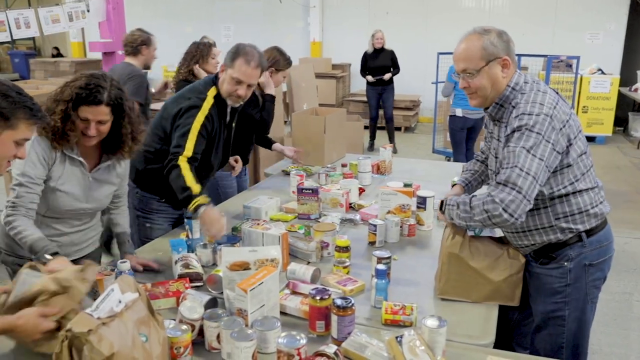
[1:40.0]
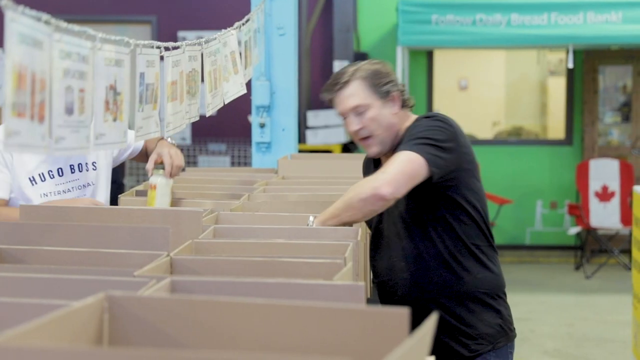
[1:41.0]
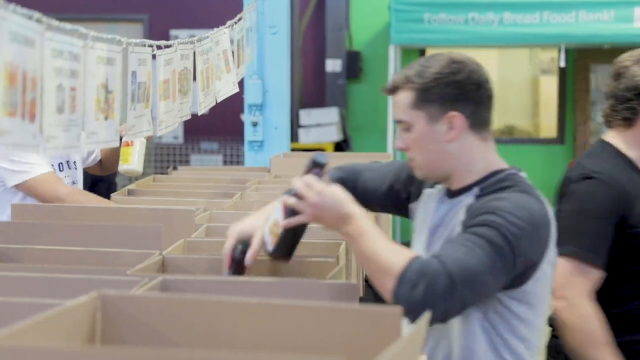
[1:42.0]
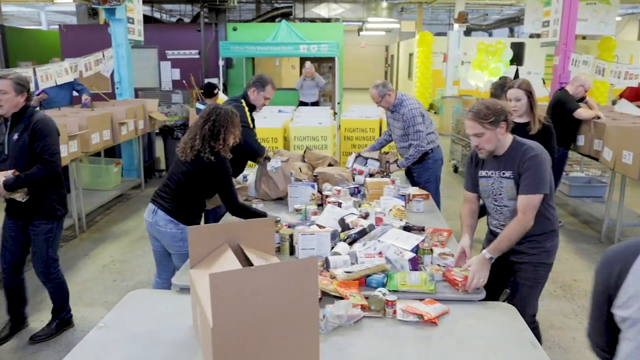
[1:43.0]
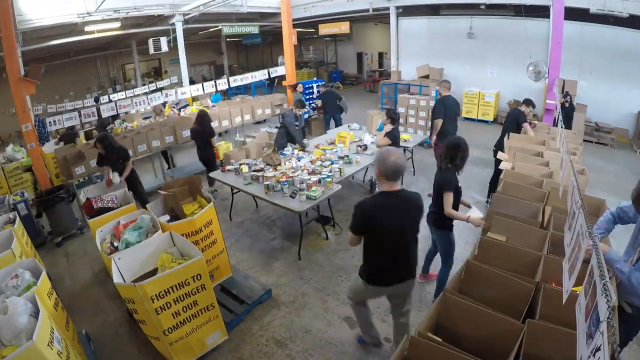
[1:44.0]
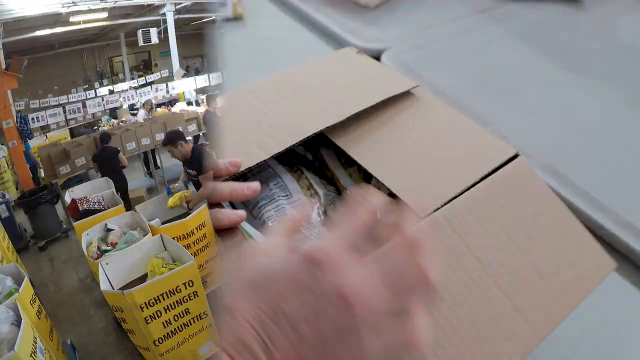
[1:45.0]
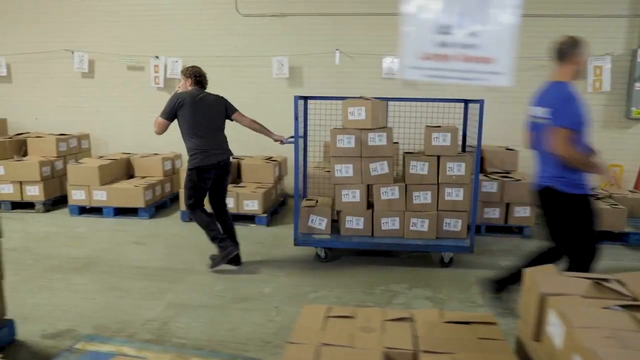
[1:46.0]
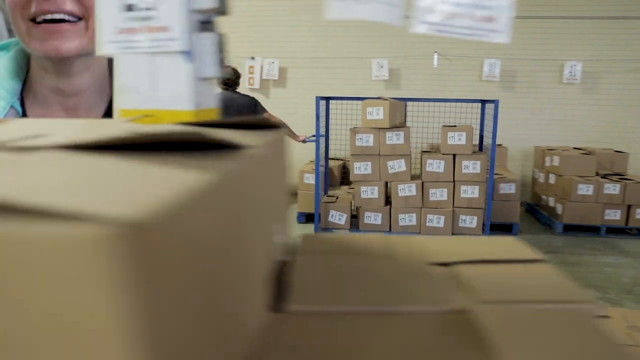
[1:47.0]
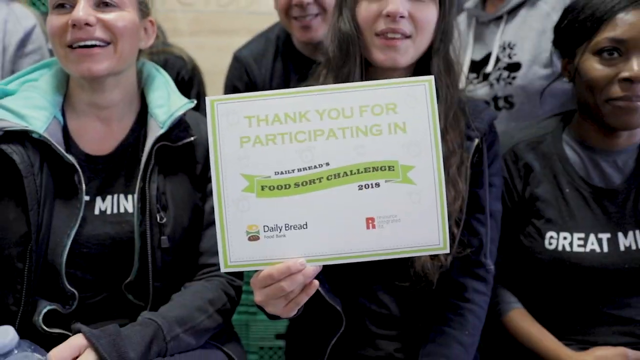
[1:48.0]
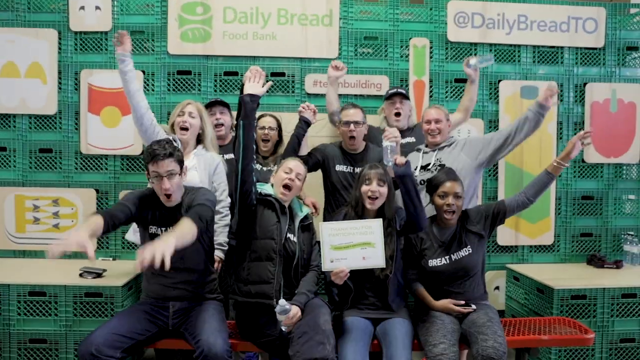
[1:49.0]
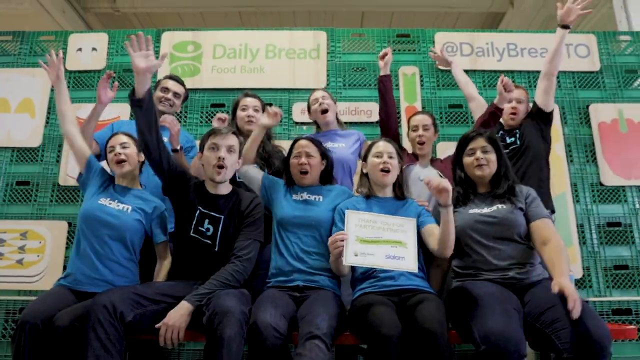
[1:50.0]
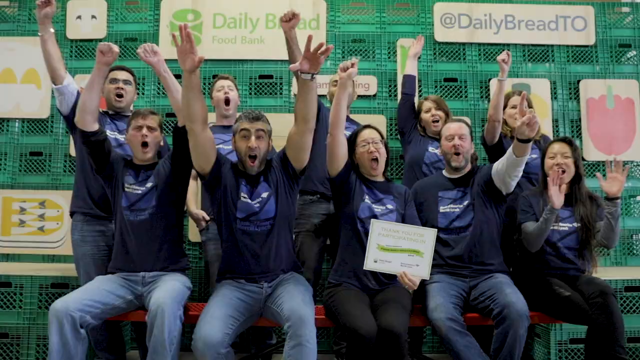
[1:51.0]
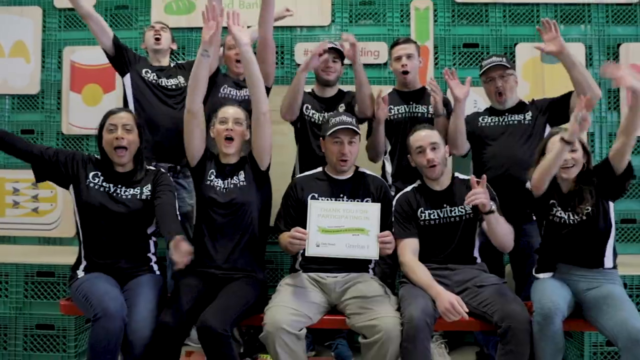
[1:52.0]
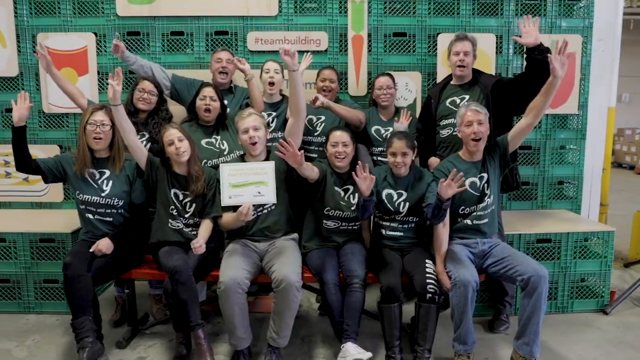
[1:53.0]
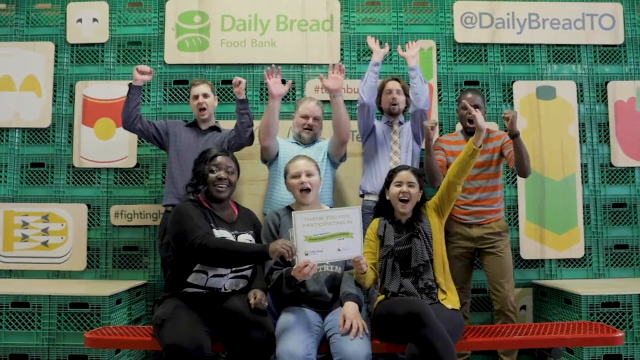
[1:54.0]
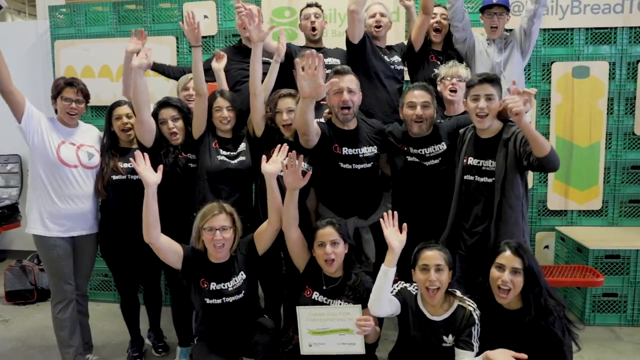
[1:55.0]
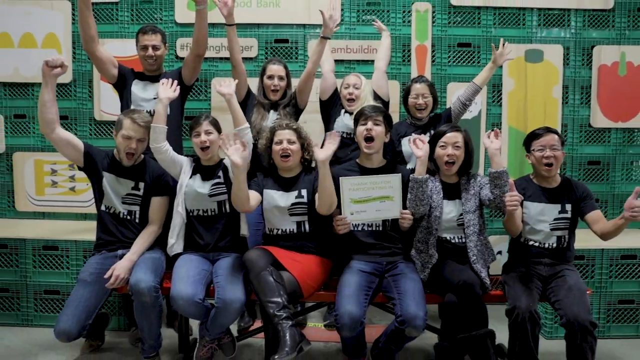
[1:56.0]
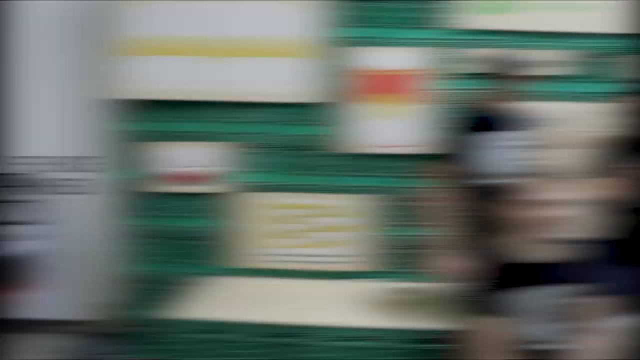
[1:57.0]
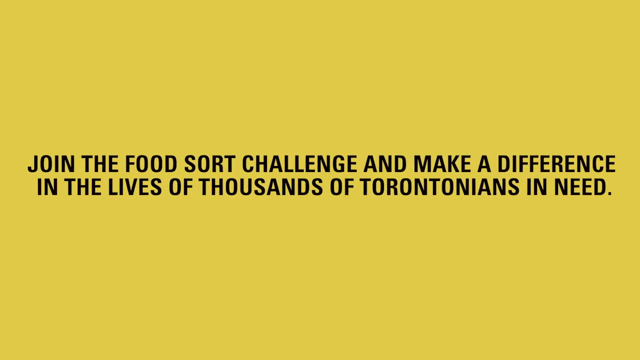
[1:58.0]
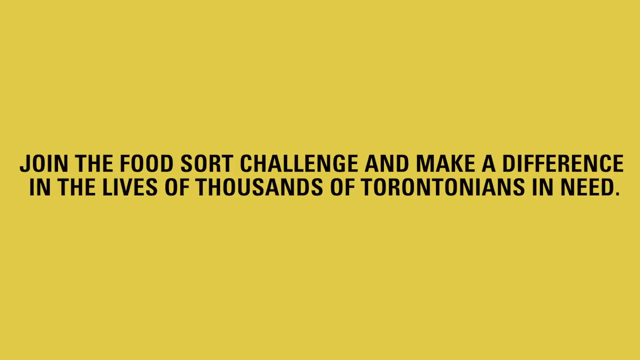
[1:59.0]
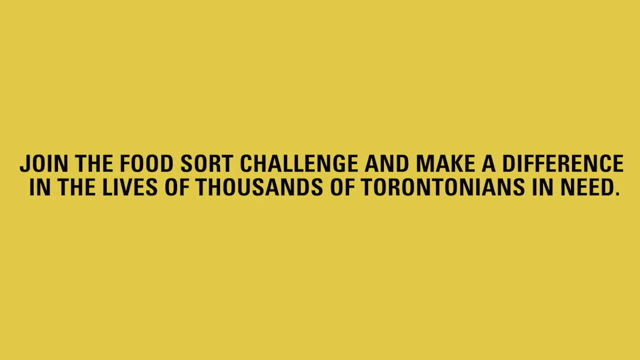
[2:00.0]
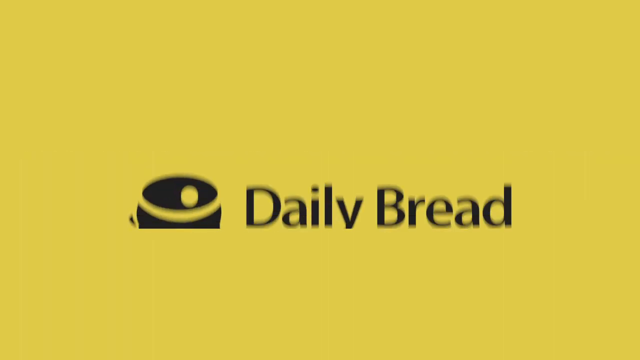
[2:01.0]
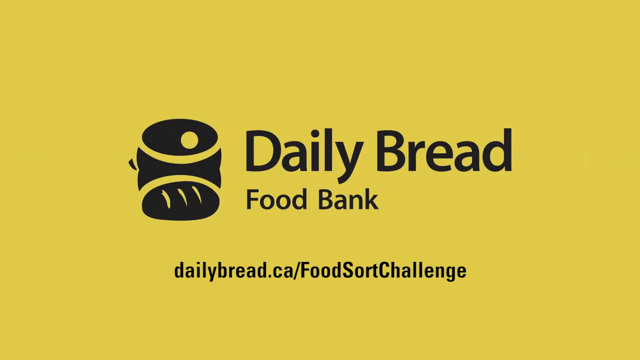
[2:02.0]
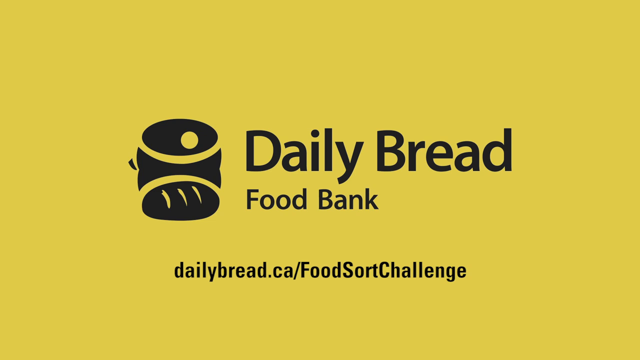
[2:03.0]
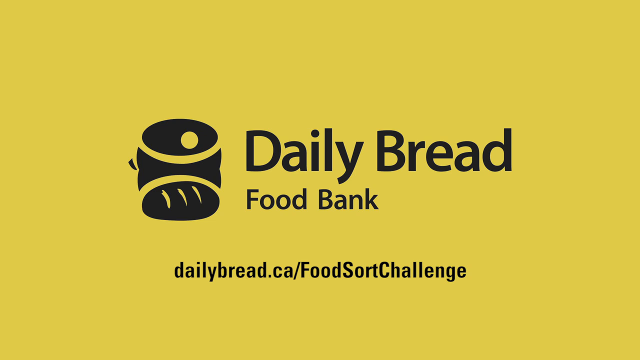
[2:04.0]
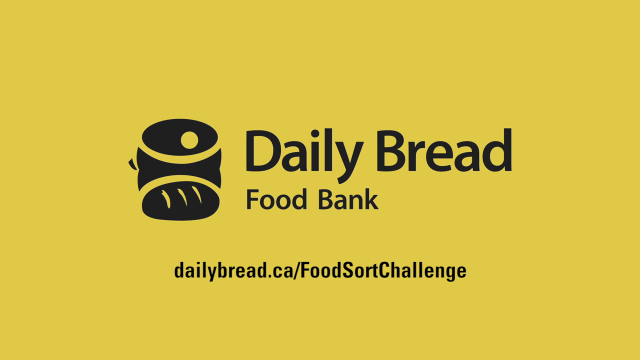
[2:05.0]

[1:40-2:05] People are gathered around a gray-top table with lots of food items on it, including bottles, cans and boxes. Females and males of varying ages, most of whom look Caucasian, are all around it sorting through items and putting them into cardboard boxes, probably filling donation boxes with a certain amount of certain types of goods. A time-lapse shows them working quickly, taking food off the gray tables and putting it into small cardboard boxes, and taking items out of bigger white boxes with yellow labels; one label apparently says "fighting to end hunger in our nation". Next, a rather small brown cardboard box full of food items is closed by somebody with white hands. A man pulls a cart that looks like a caged cart with a lot of cardboard boxes in it. Finally, a group of people raise their arms up over their heads, looking like they are cheering or yelling, with their mouths open; one of them holds a white certificate with green text on it.